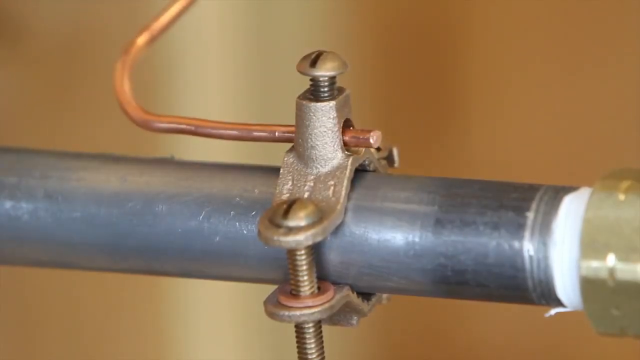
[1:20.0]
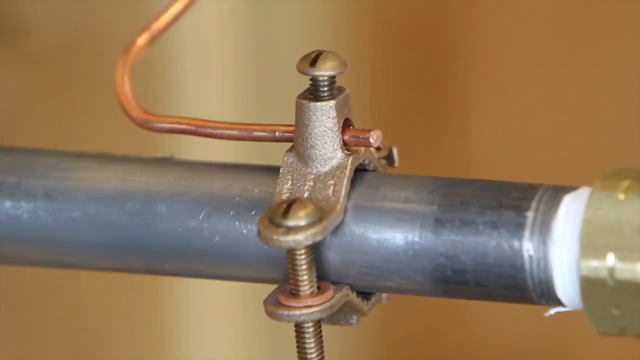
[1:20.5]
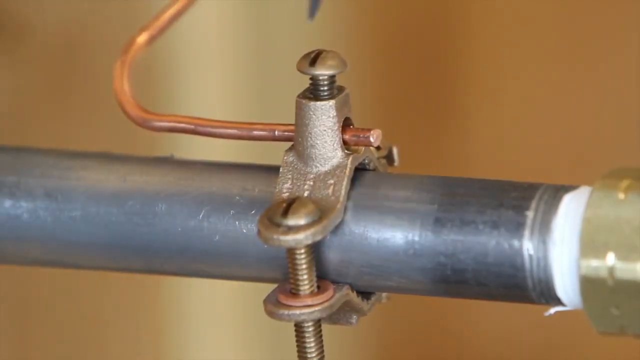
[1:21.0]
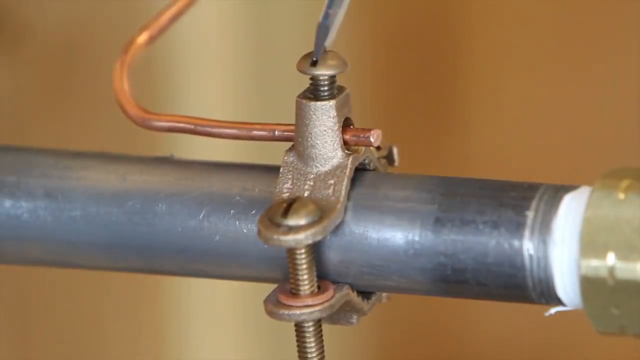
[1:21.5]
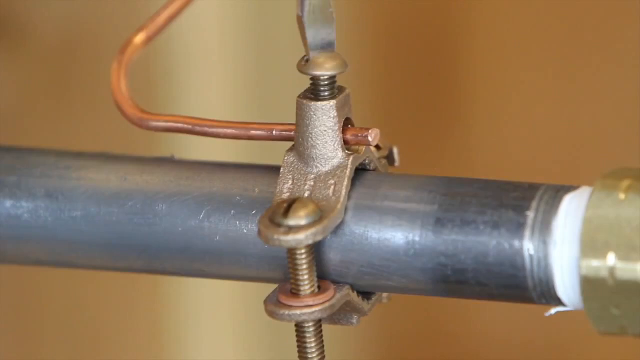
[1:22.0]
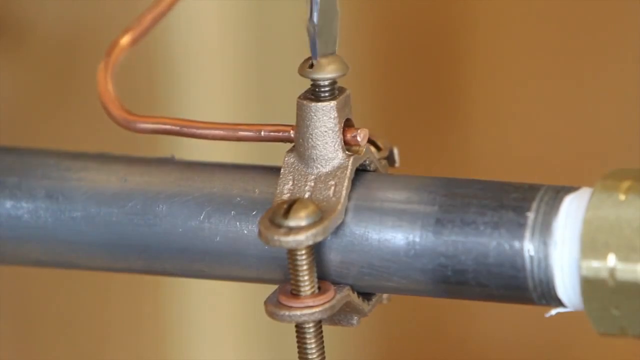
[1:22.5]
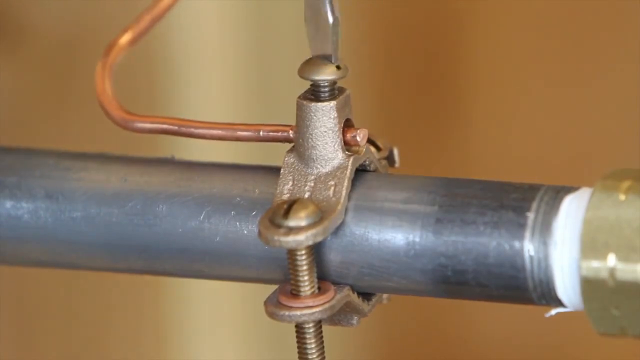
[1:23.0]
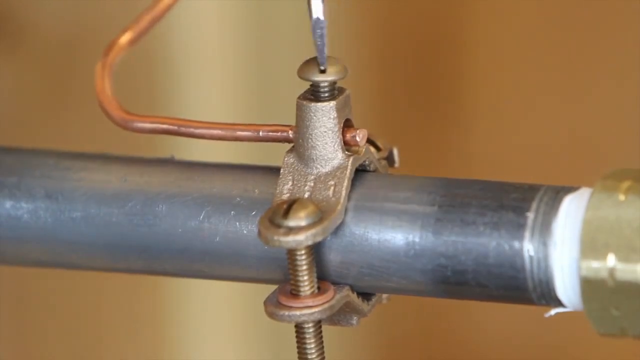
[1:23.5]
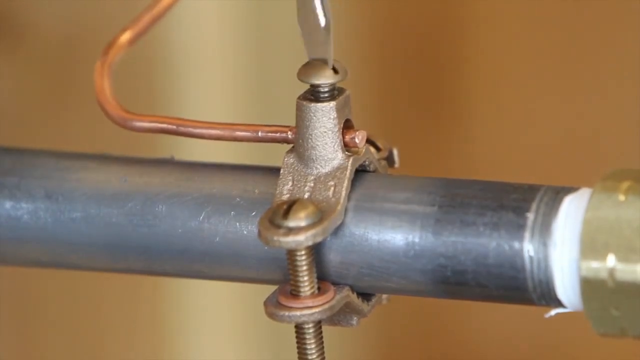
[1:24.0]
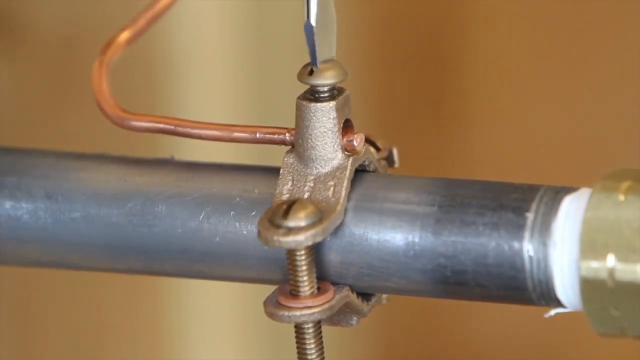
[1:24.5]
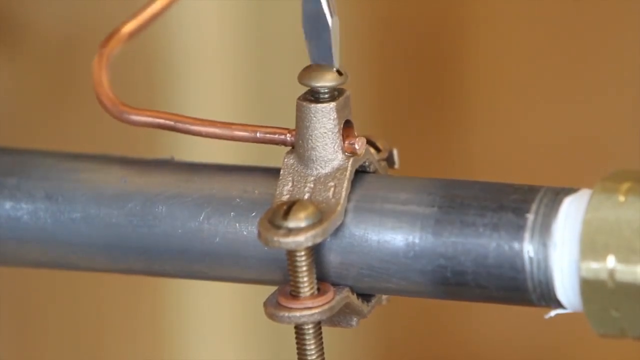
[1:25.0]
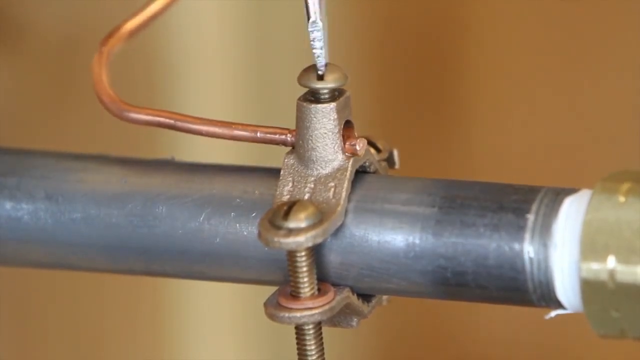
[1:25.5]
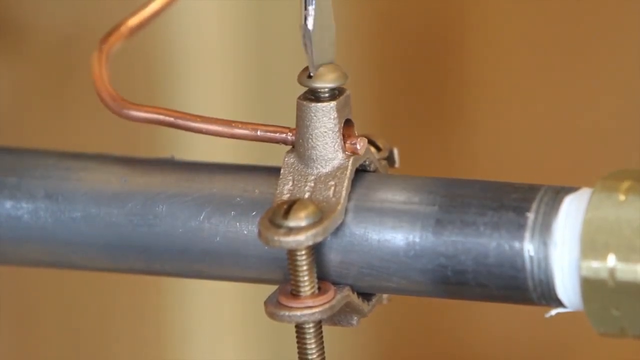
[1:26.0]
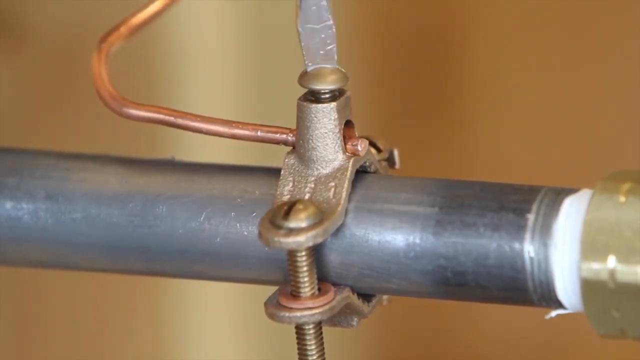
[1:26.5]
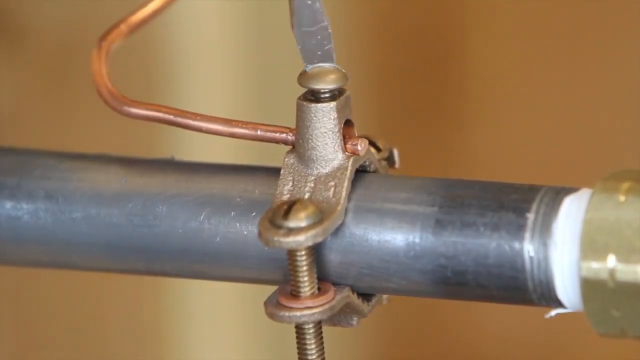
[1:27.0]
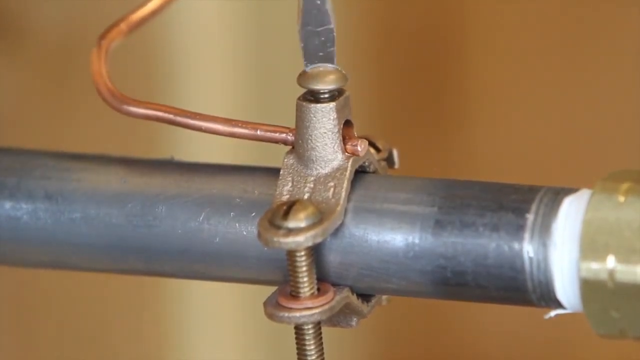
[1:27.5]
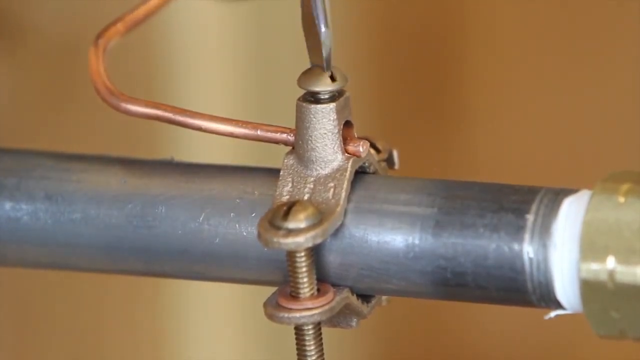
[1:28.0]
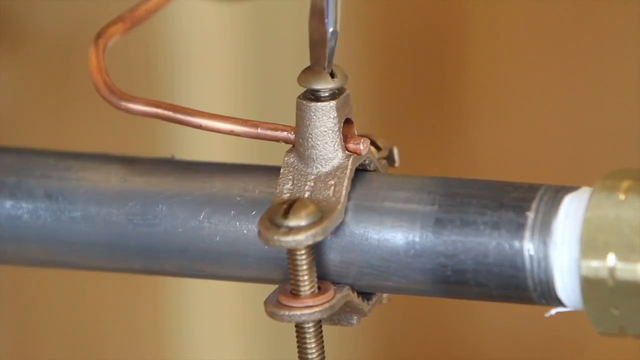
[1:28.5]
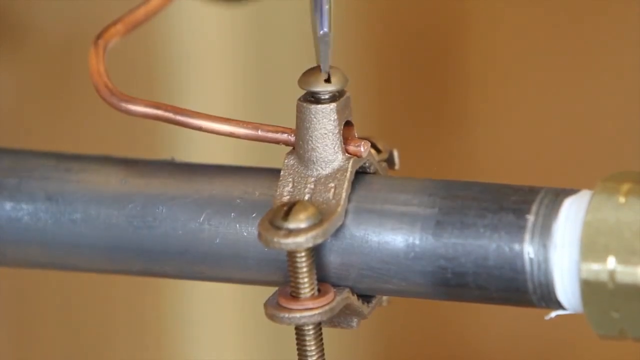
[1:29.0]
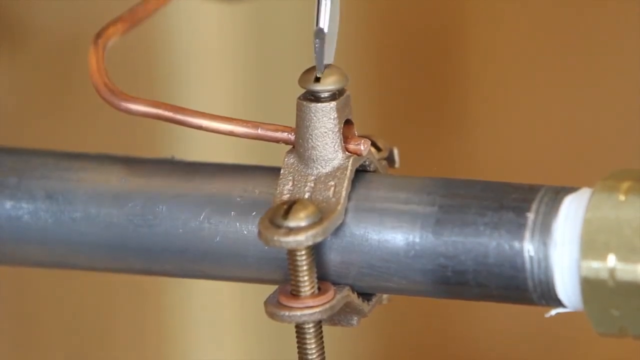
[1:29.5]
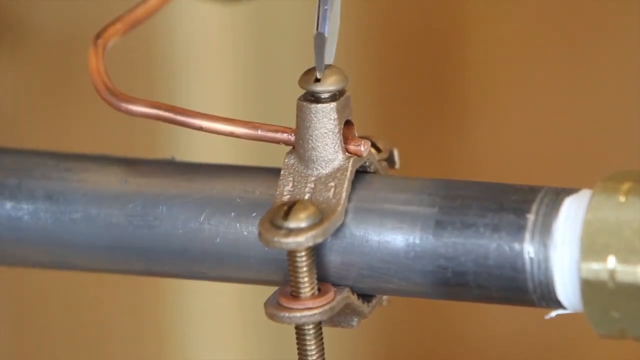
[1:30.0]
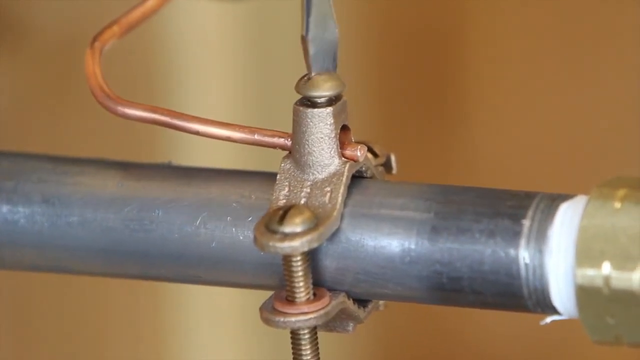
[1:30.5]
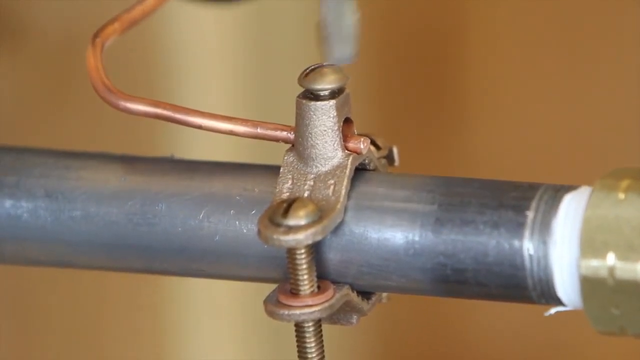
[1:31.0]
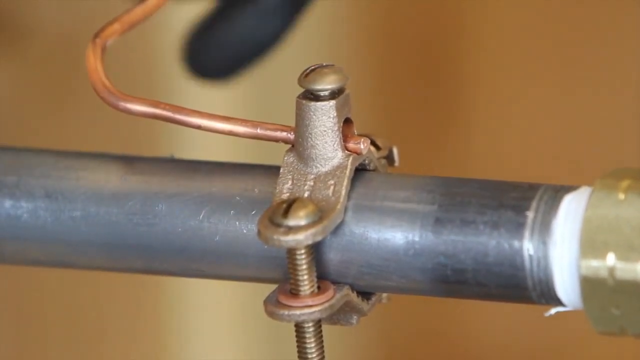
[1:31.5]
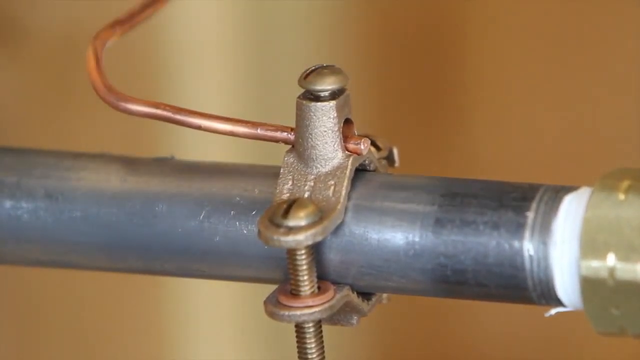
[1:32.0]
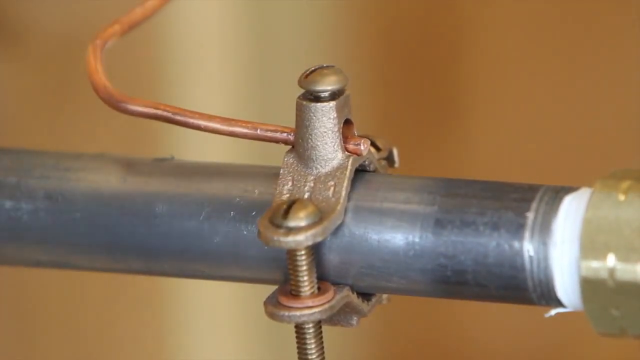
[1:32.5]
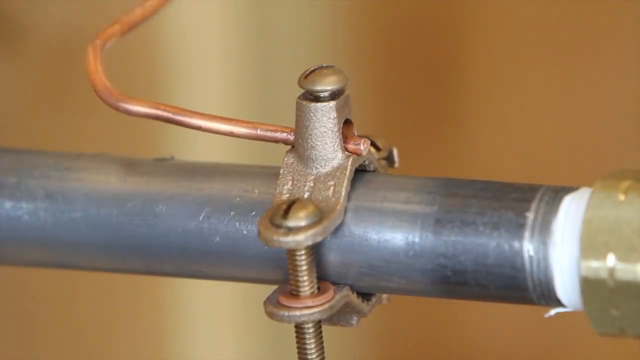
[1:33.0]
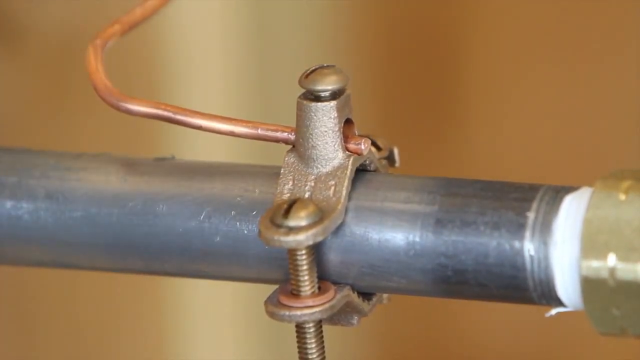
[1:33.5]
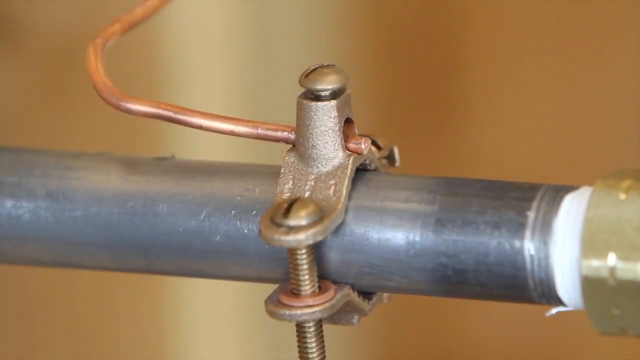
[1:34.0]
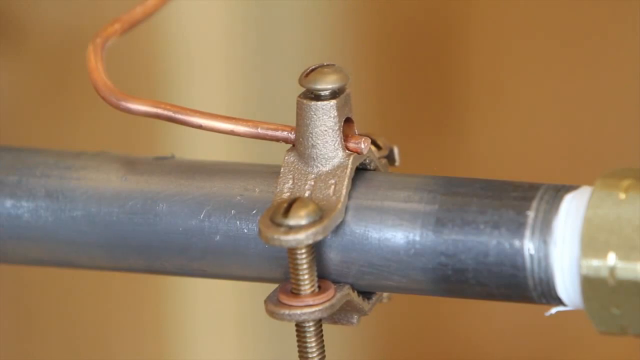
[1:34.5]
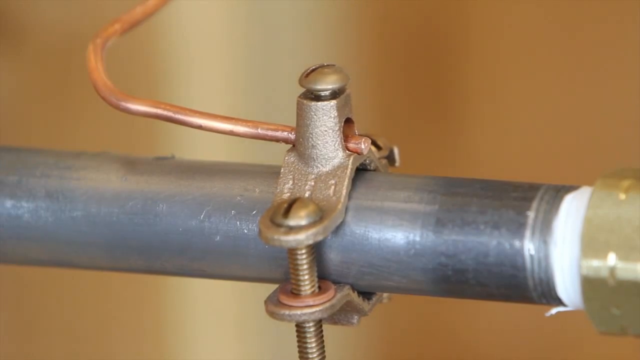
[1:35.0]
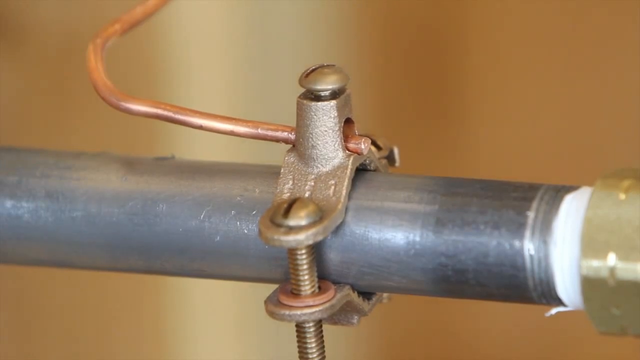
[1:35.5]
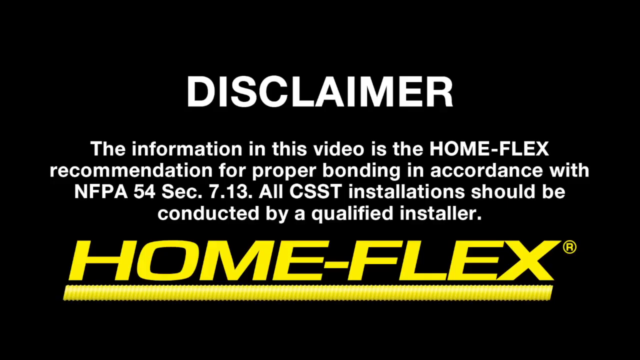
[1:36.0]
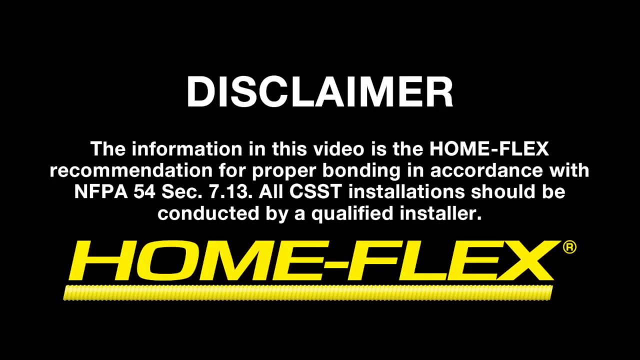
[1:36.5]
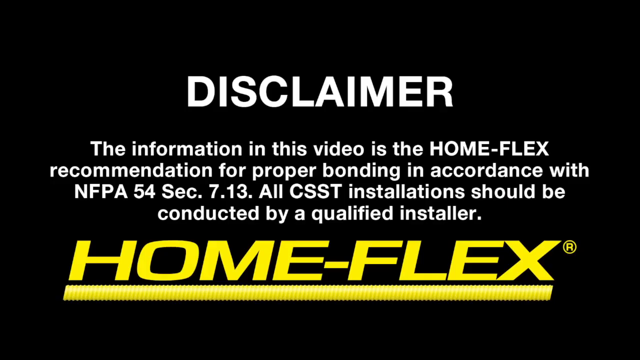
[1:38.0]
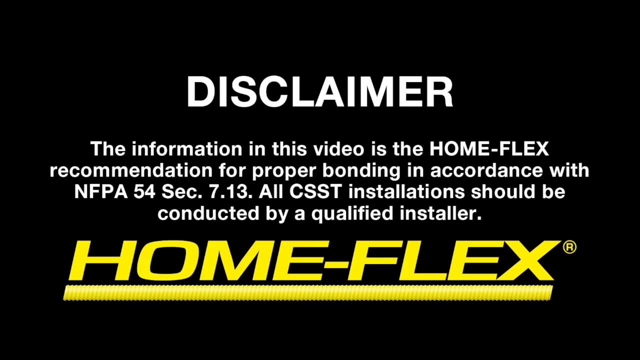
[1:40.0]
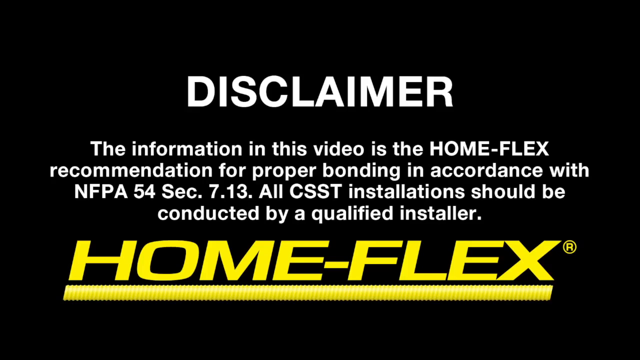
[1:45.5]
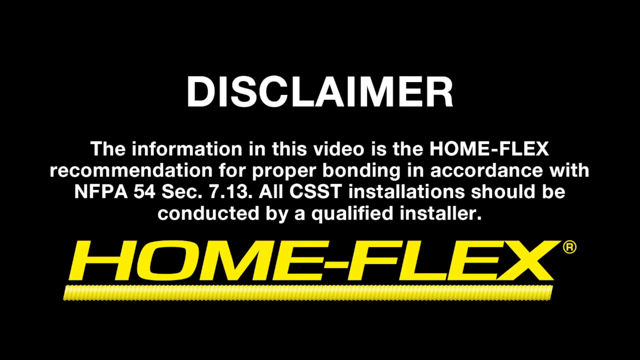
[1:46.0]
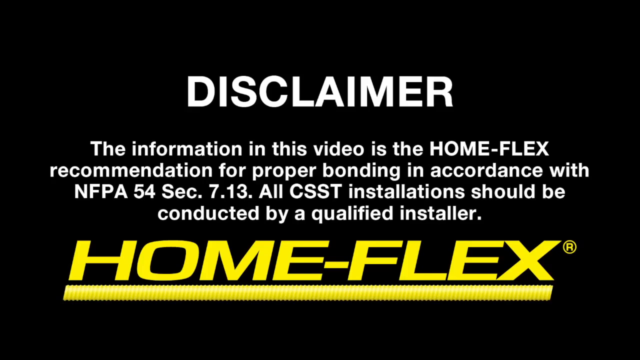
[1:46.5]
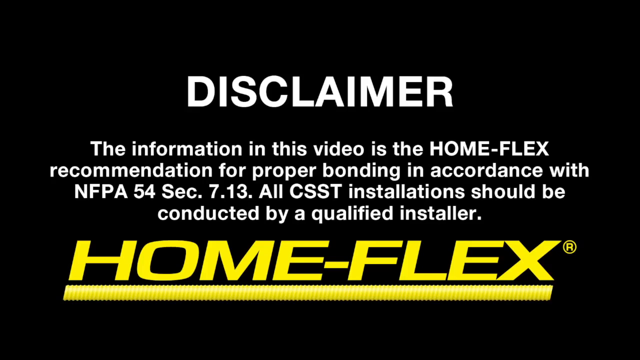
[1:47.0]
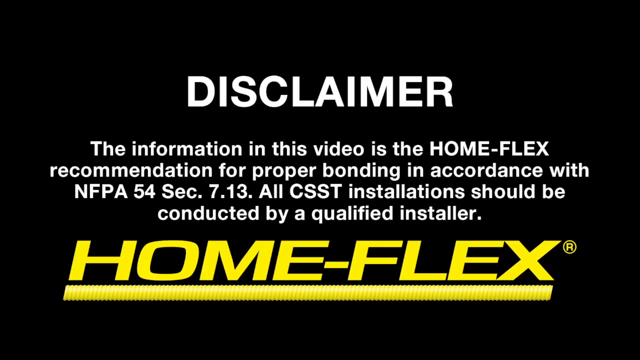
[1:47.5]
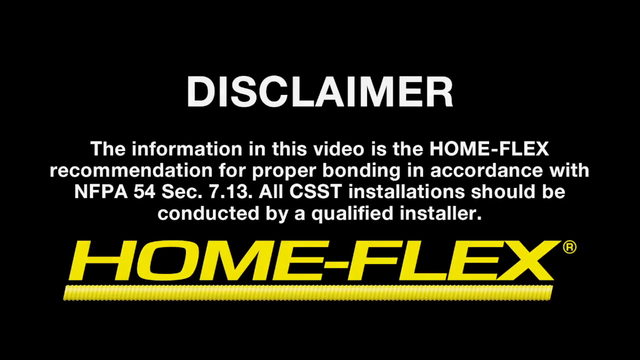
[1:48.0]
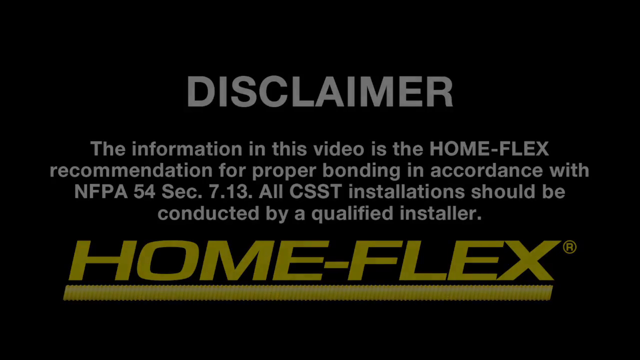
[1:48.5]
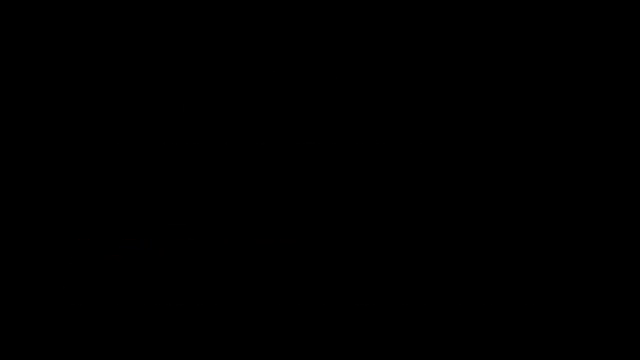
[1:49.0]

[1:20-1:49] In a close-up, the copper wire goes through a hole in the clamp. A screwdriver comes in and tightens the screw where the copper wire is to hold it in place, turning clockwise, and then the screwdriver is removed. The view holds on the clamp for a moment. Then the same disclaimer appears on a black background, with the word at the top center and the HomeFlex logo at the bottom: yellow "HomeFlex" with a yellow line underneath. The center reads "the information in this video is the HomeFlex recommendation for proper bonding in accordance with NFPA. Installation should be conducted by a qualified installer." The static screen stays up for several seconds with no movement, and then the video fades to a completely black screen.